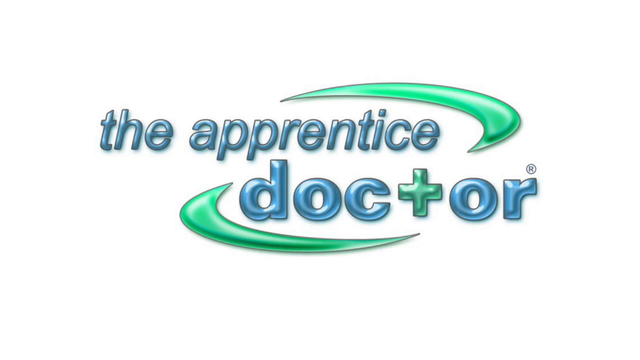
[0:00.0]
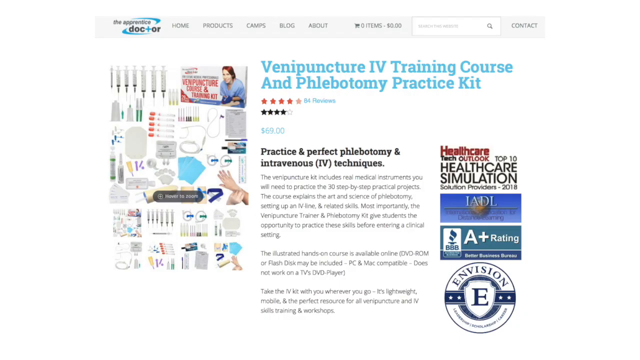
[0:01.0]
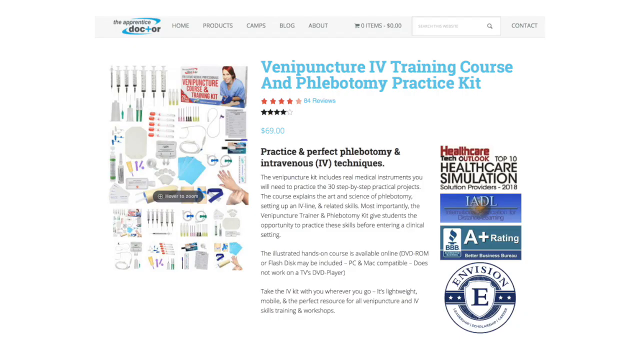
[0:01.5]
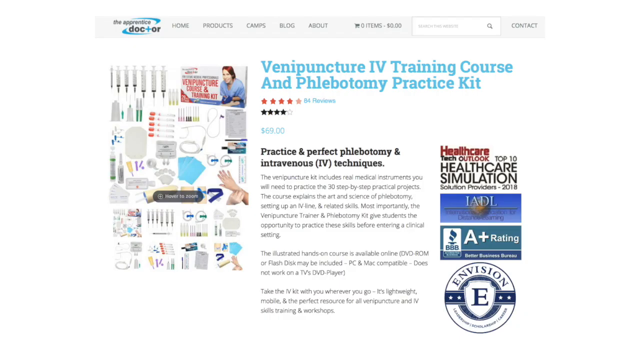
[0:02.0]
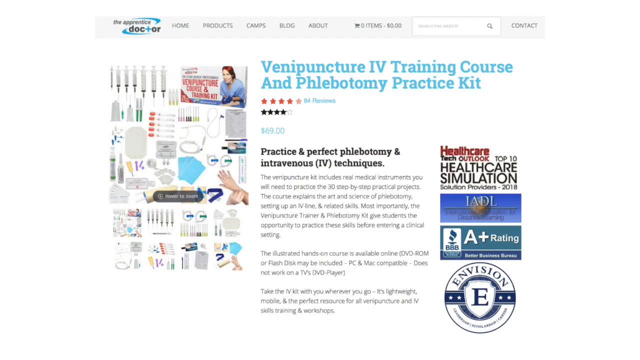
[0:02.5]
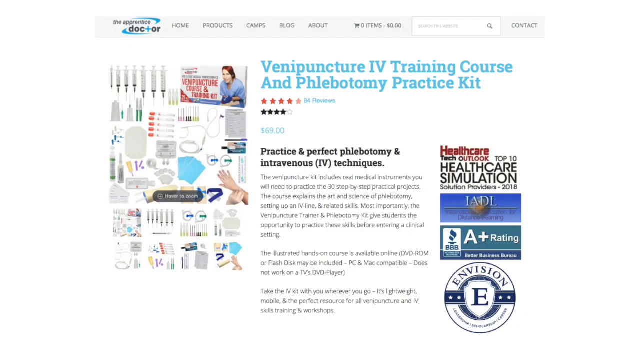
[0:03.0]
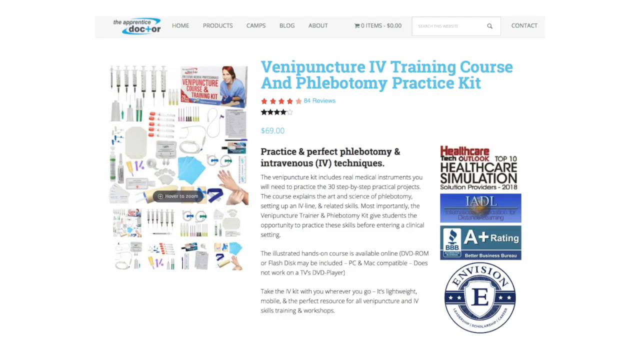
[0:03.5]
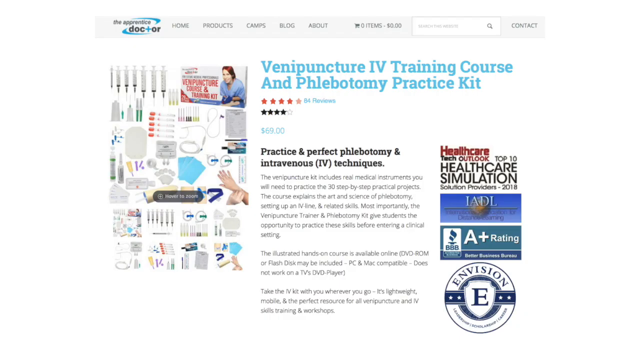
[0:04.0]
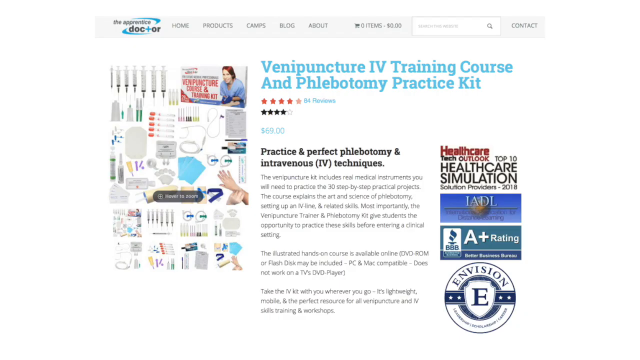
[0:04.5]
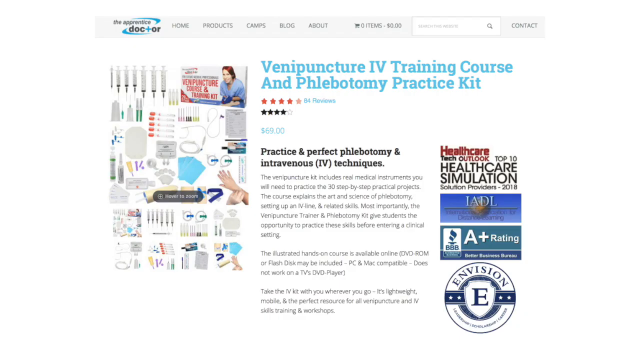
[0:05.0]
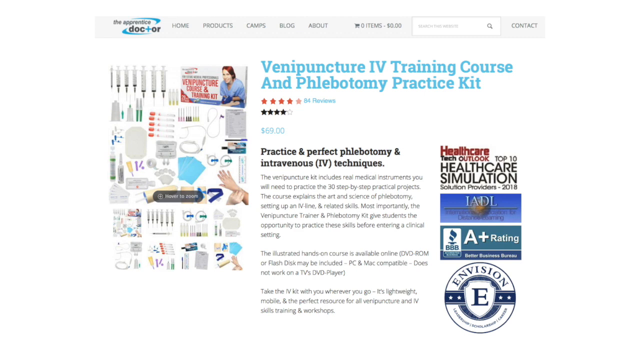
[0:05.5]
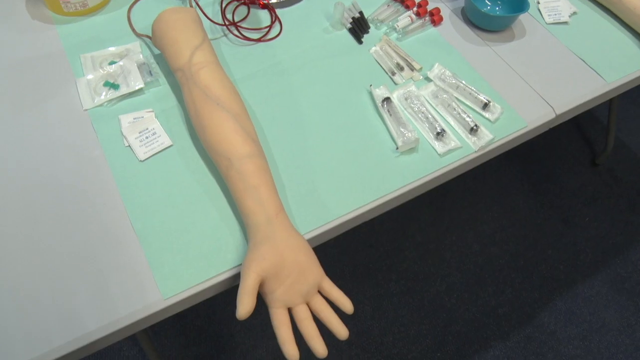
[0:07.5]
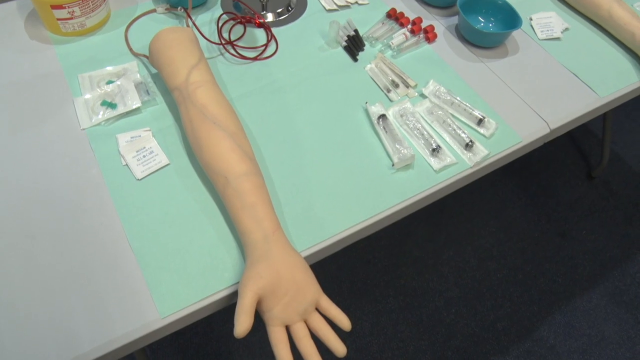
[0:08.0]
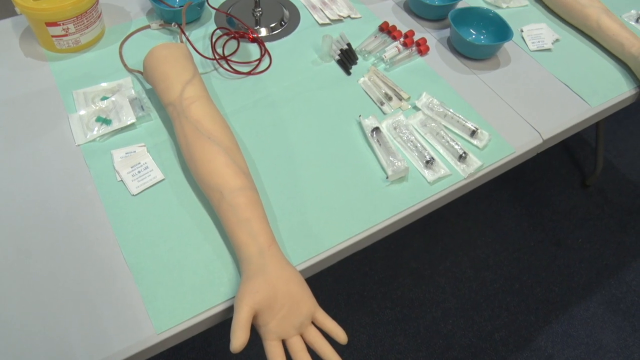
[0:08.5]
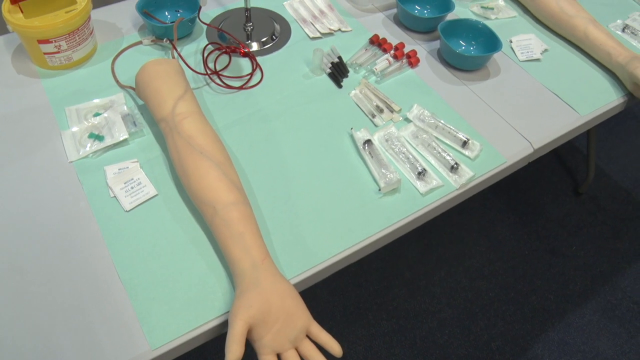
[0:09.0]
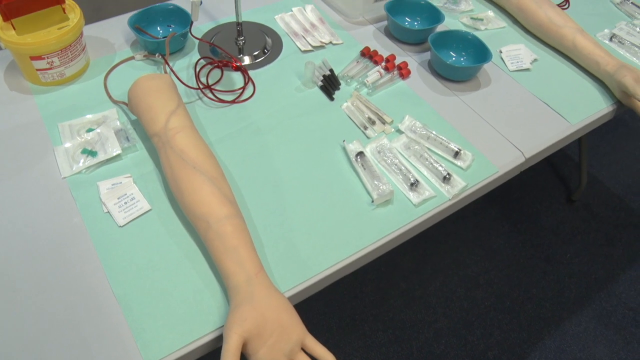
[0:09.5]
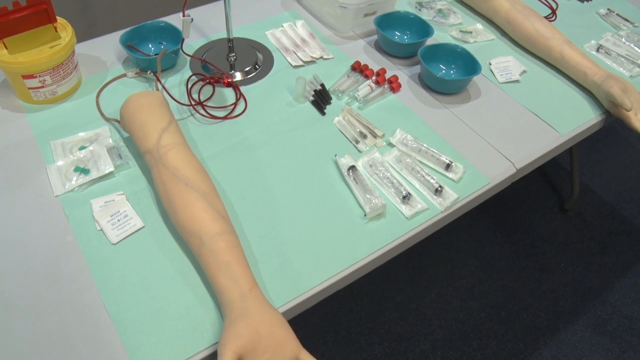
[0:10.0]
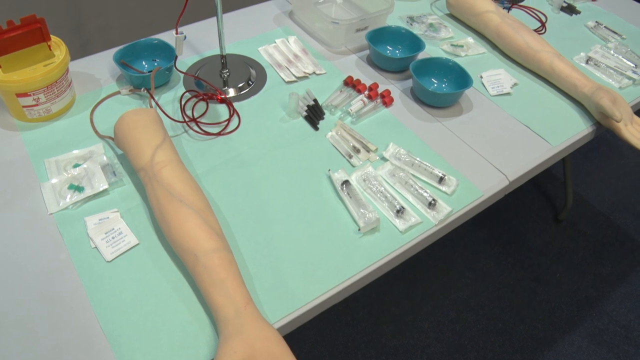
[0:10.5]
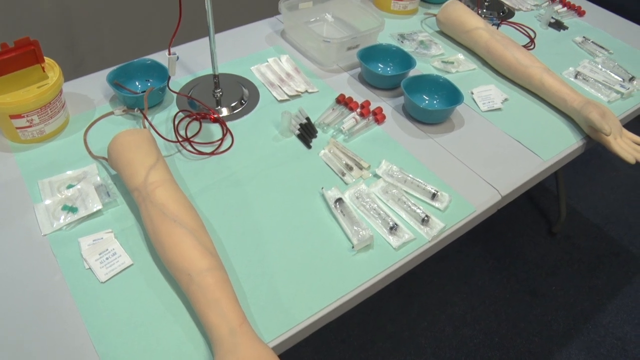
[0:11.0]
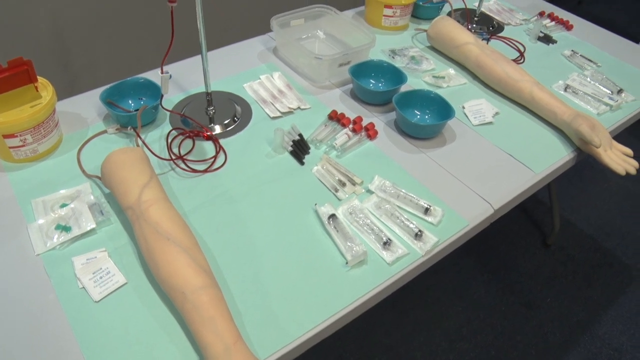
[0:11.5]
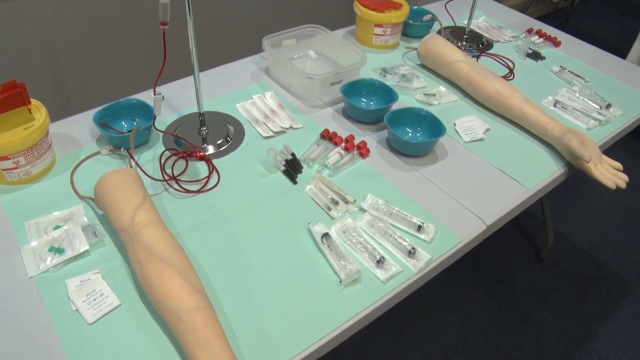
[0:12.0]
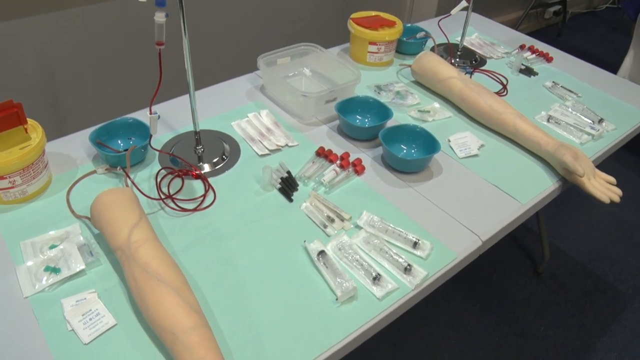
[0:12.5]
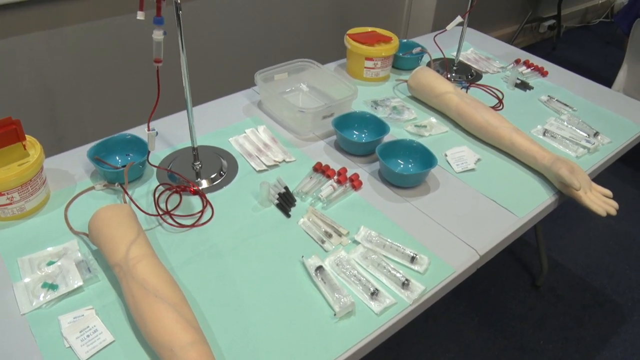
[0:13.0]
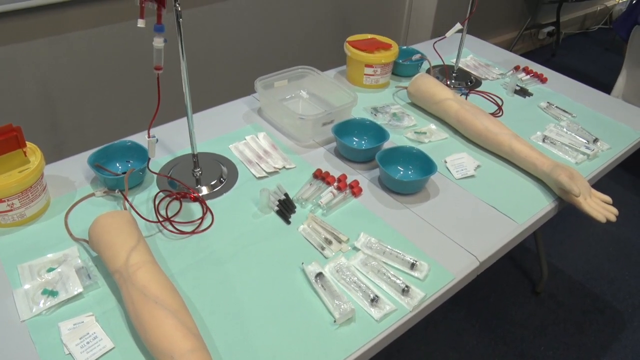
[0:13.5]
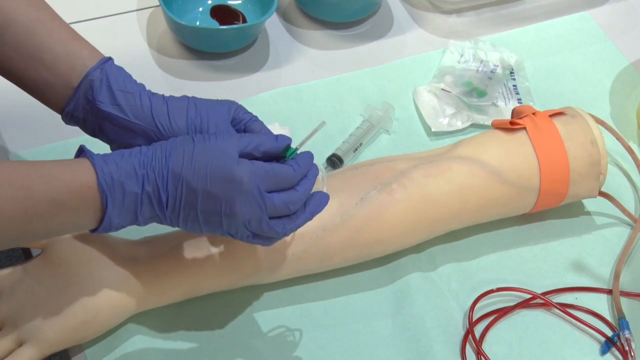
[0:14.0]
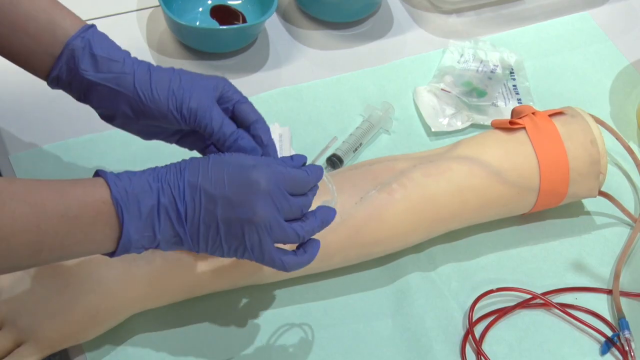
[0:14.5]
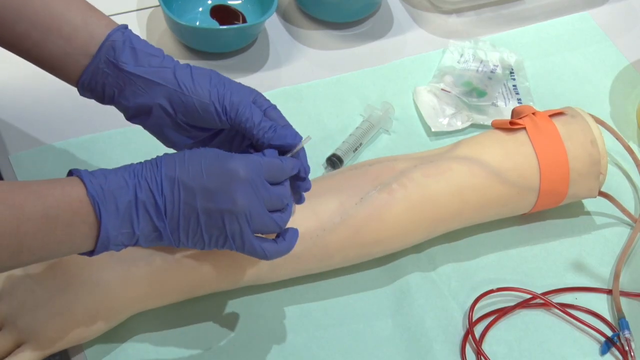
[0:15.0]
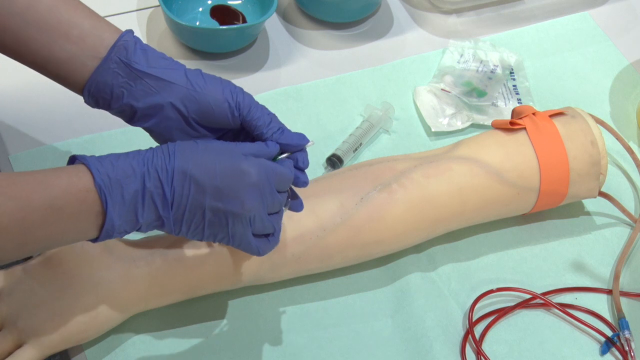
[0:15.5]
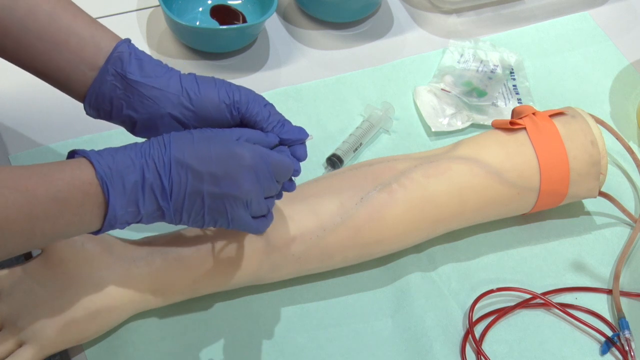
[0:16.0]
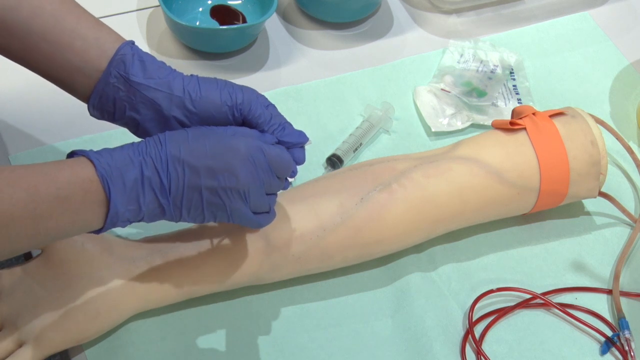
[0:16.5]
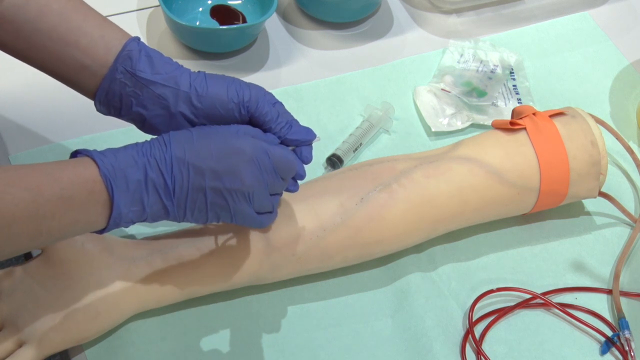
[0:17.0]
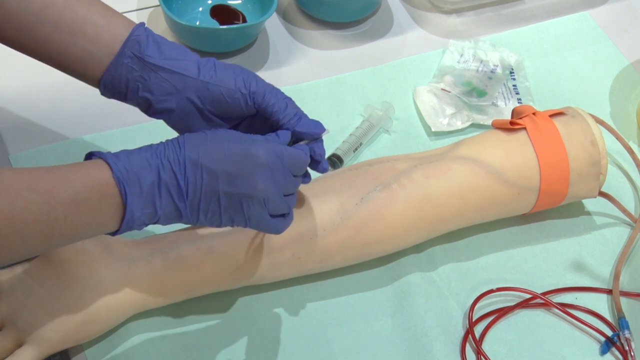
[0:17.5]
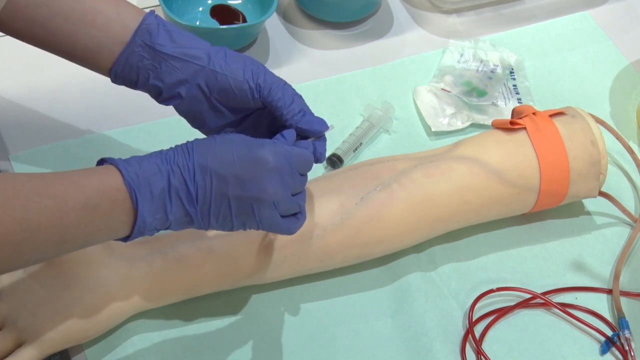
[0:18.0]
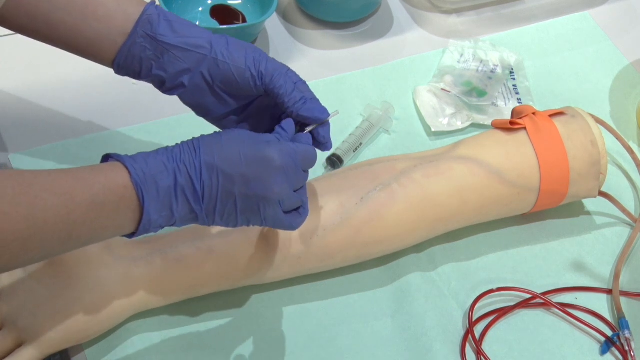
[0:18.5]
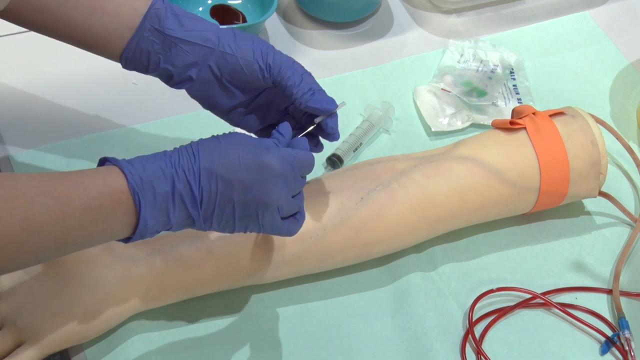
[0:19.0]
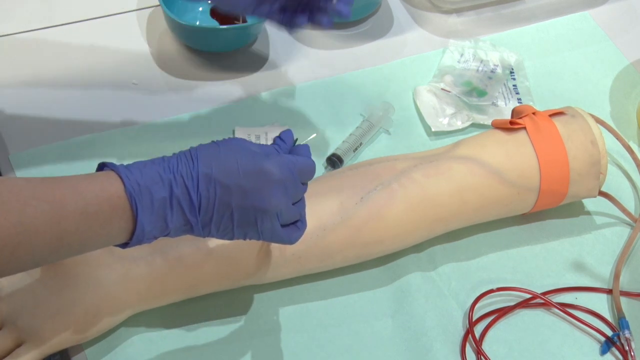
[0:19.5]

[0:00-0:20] The video opens on a white background with the logo for The Apprentice Doctor, written in all lowercase letters in blue. Next comes what looks like a website showing a product page for the Venipuncture IV Training Course and Phlebotomy Practice Kit. On the left is a large product image of the many items included in the kit, such as different syringes, plastic tubes, applicators, little bottles and other medical instruments. On the right are a few certifications, such as from the Better Business Bureau, Envision, IADL and more. The scene changes to what looks like a gray table with the products from the IV kit laid out on it, covered by large, somewhat light teal square pieces of paper. There are two working sections with identical setups, each with a dummy arm running from roughly above the elbow down to the fingertips, along with items from the kit such as syringes and bottles lying on the table. In a close-up, a pair of blue-gloved hands appears to hold a needle with a plastic cap on it, sort of hovering it over the fake dummy arm, and removes the clear plastic cap from the needle.